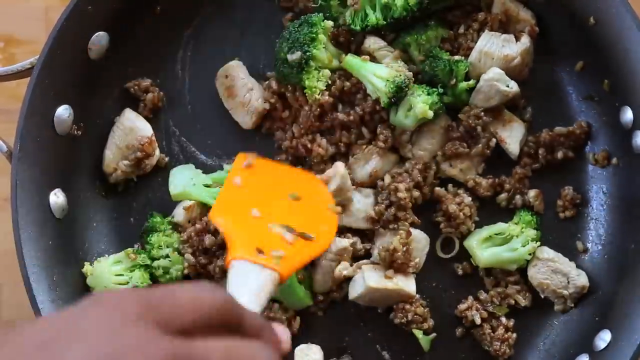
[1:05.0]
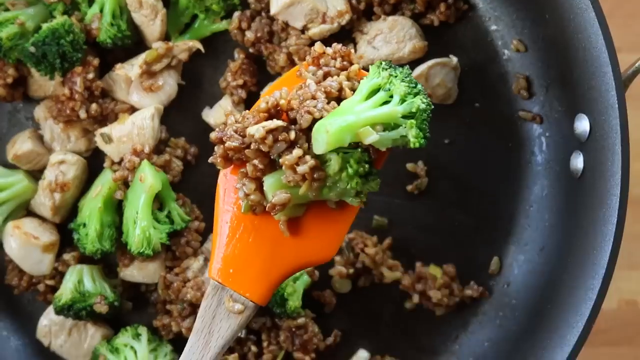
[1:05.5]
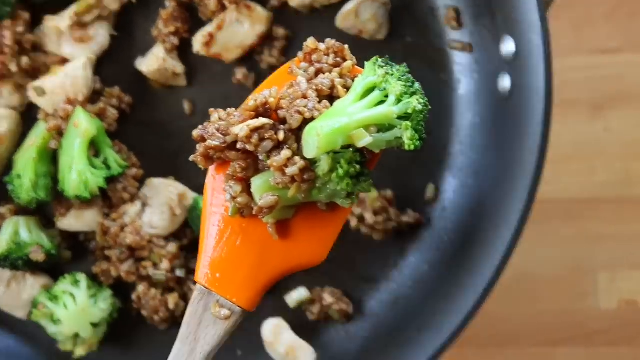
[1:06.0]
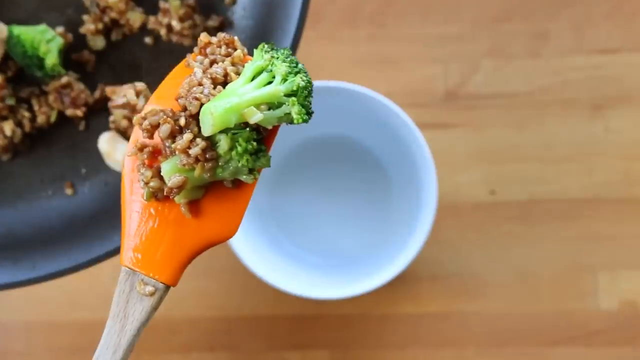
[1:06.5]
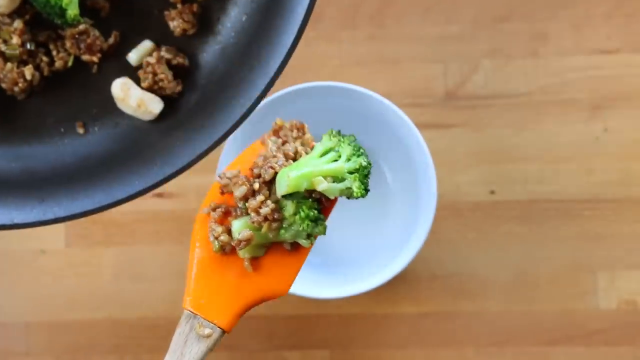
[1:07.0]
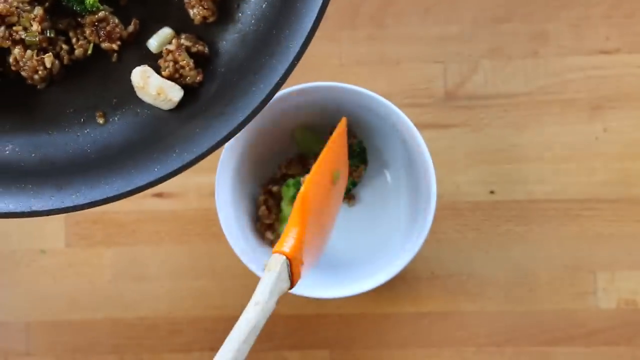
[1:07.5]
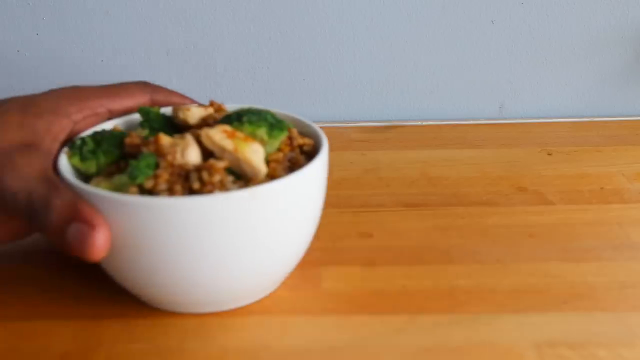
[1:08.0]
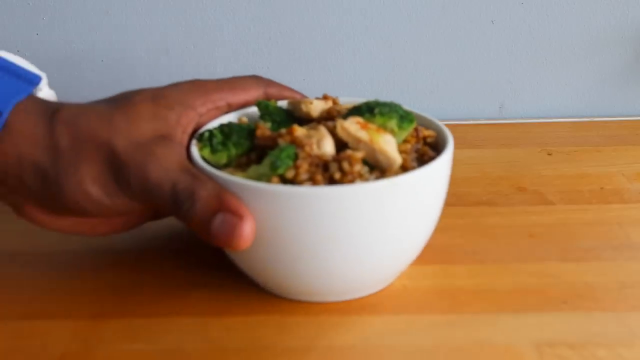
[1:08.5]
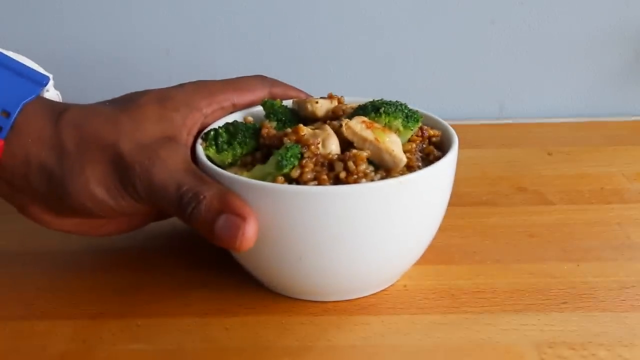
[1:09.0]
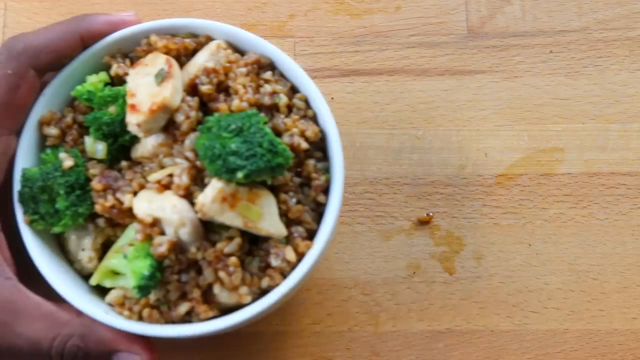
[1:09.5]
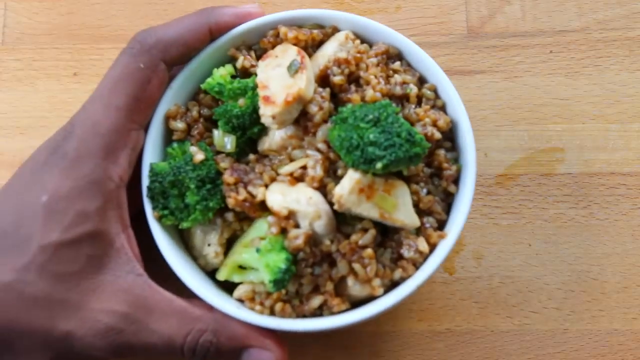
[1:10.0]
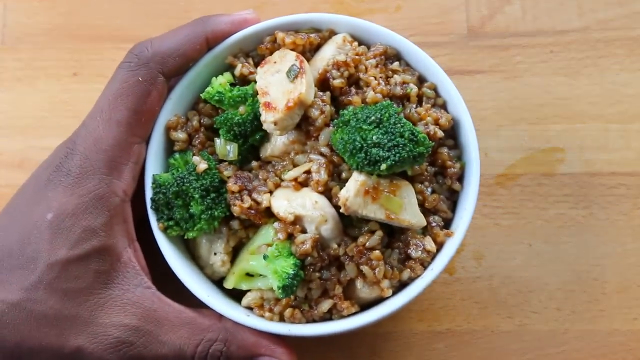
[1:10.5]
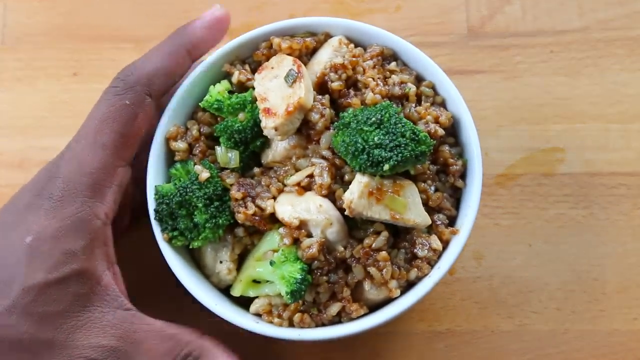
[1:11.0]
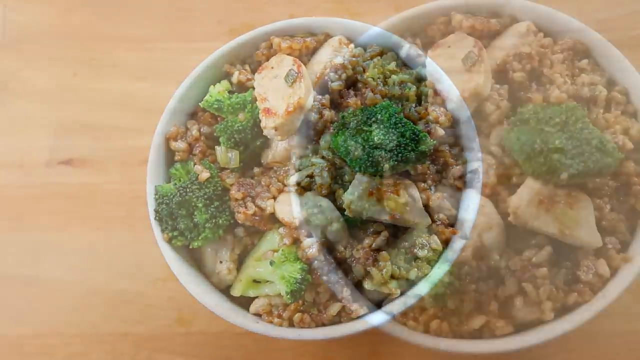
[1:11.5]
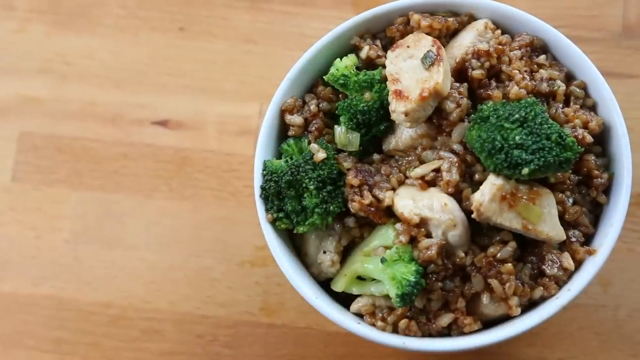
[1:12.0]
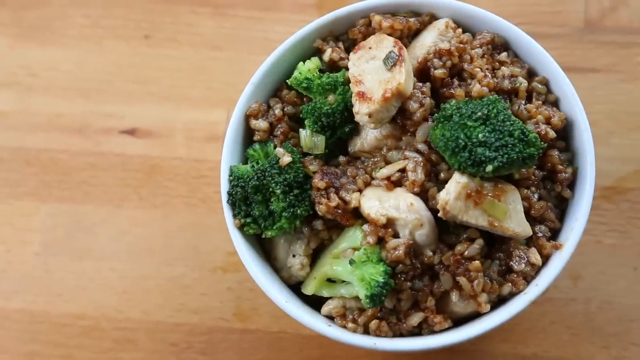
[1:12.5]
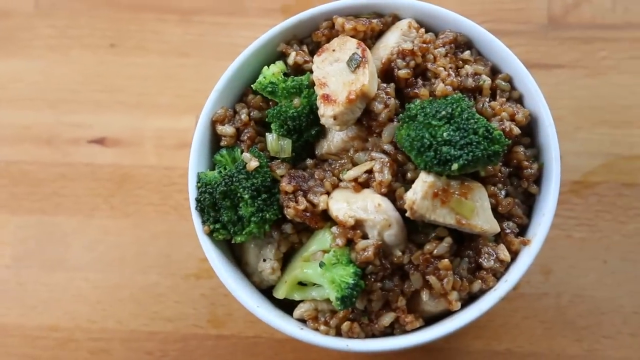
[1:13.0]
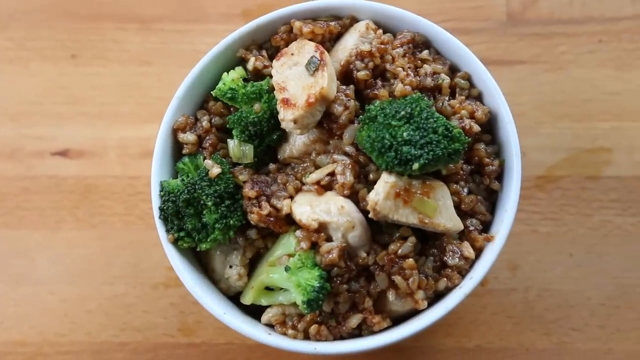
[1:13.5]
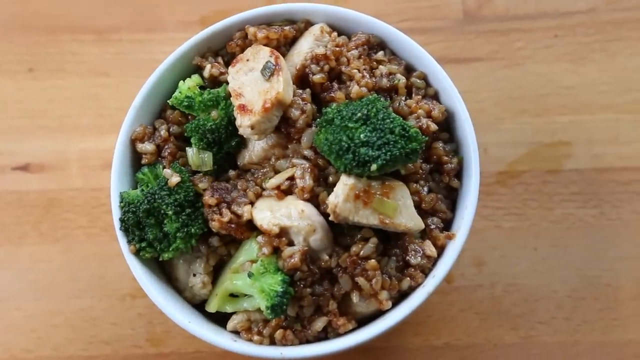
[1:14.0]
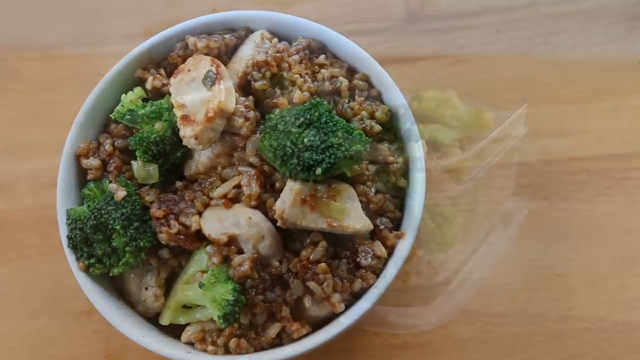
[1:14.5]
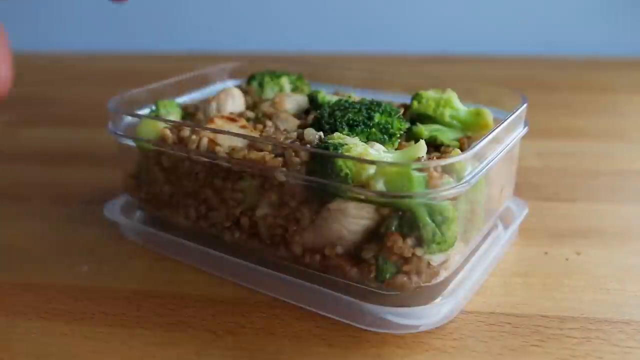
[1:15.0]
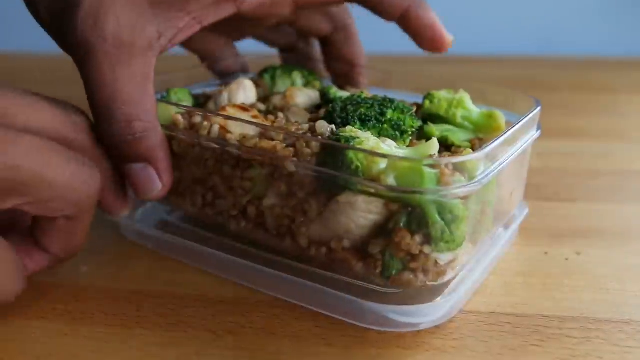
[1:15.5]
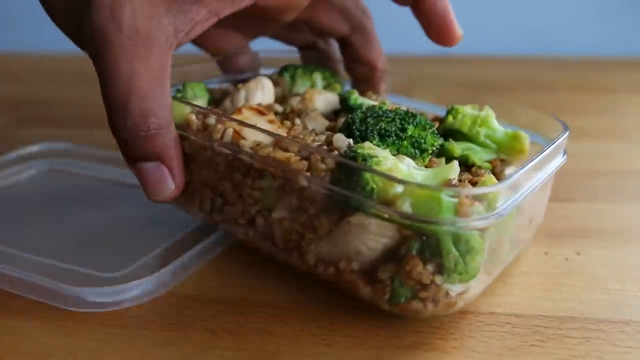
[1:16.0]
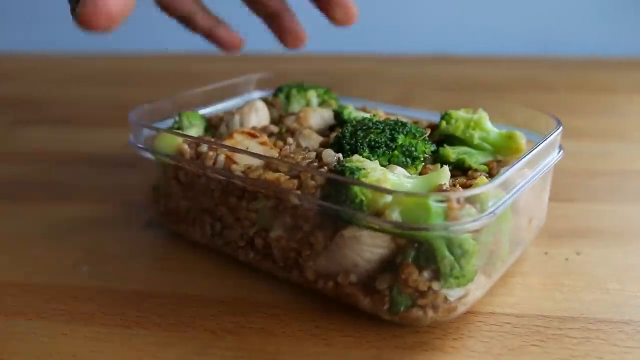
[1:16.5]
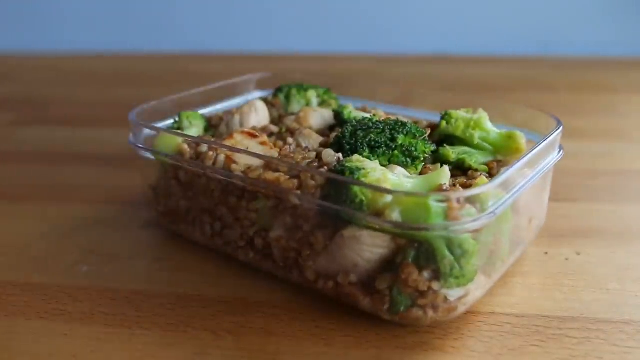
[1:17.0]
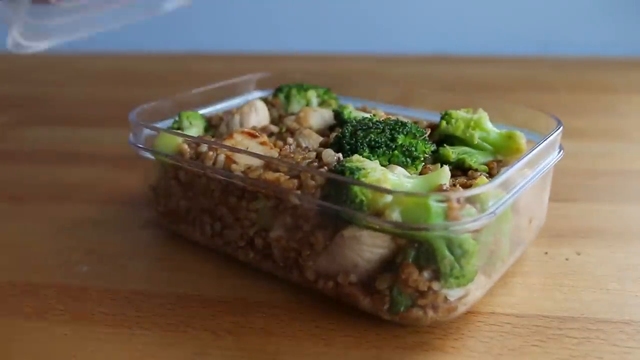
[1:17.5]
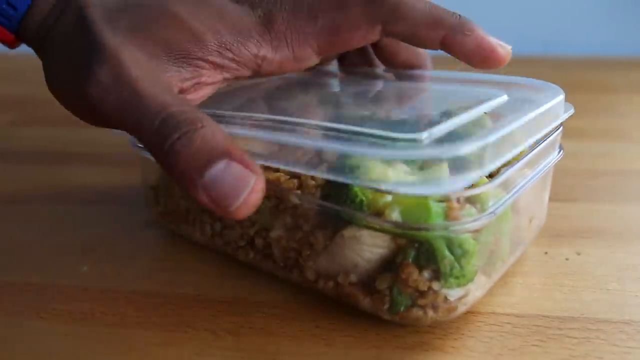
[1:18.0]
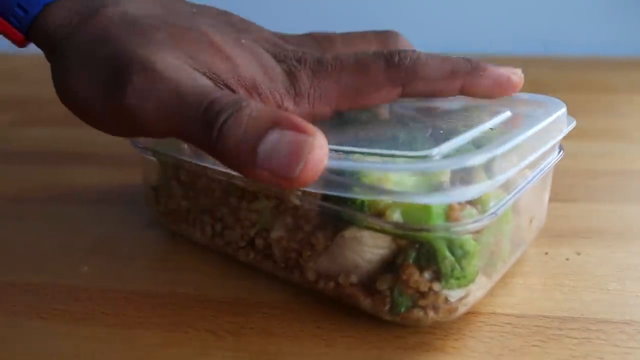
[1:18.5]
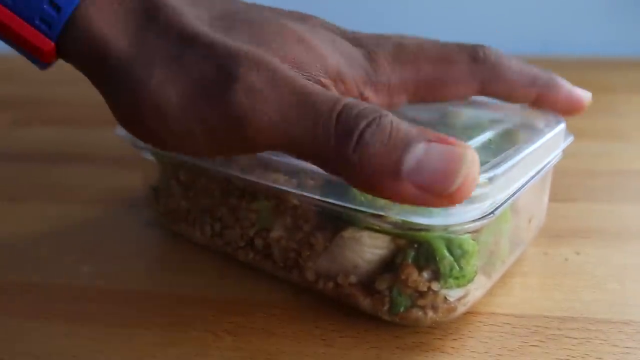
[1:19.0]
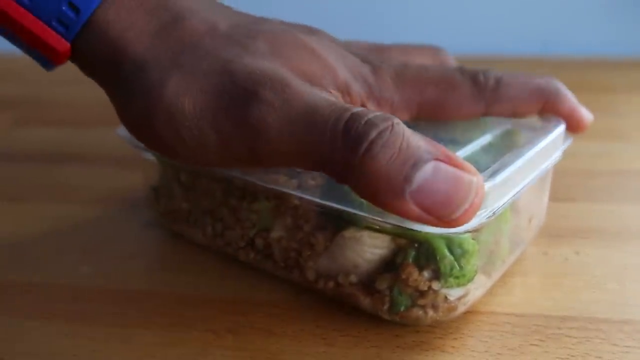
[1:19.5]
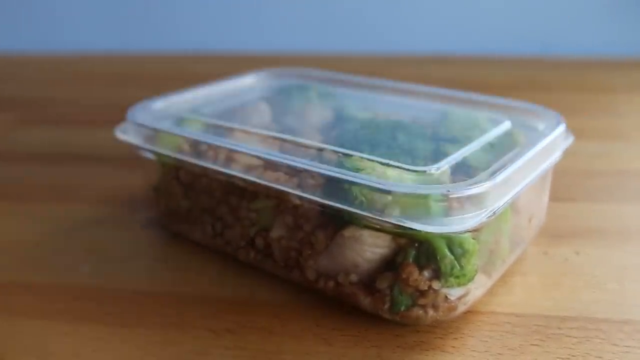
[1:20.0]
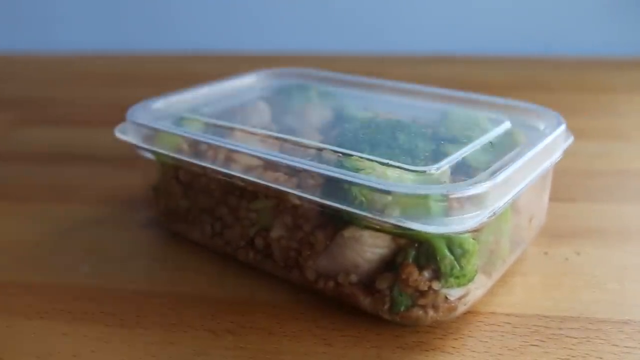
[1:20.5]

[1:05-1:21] The finished meal of rice, chicken and broccoli cooked together in the pan is scooped out of the frying pan into a smaller white ceramic bowl, apparently a serving bowl. A slow overview of the food follows against a butcher block wooden background, showing the texture of the food: the bright green broccoli, the white chicken with a little grilled char marks, and the brown covering of the rice. After panning across it, the video cuts to a meal prep style storage container of the food, and the person picks up a lid and seals it over the top.